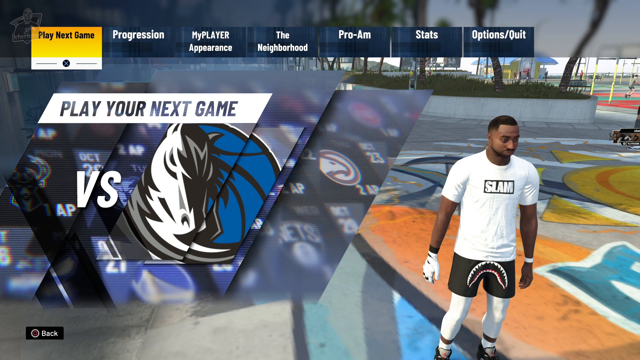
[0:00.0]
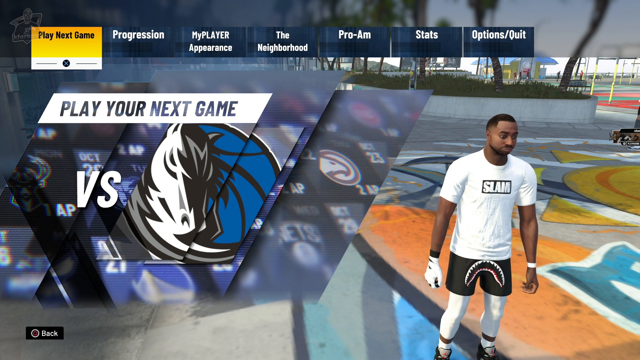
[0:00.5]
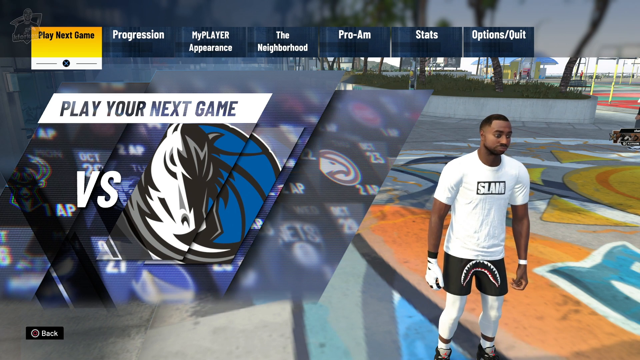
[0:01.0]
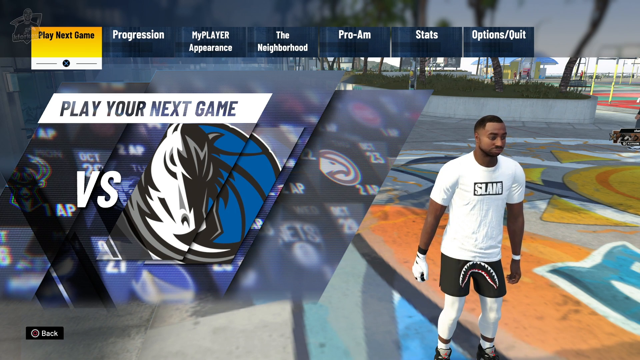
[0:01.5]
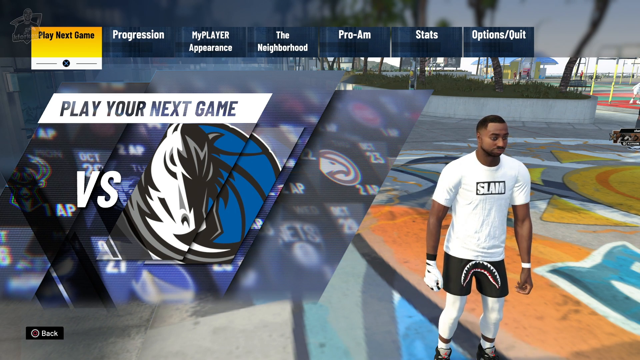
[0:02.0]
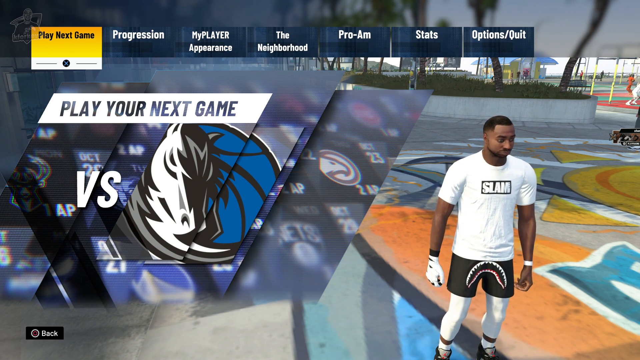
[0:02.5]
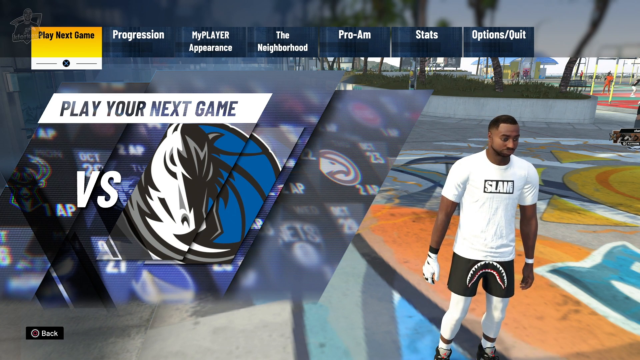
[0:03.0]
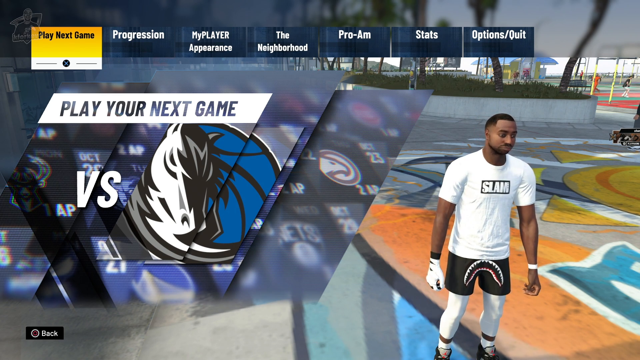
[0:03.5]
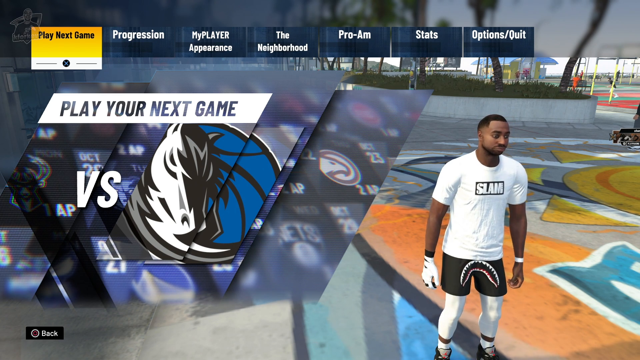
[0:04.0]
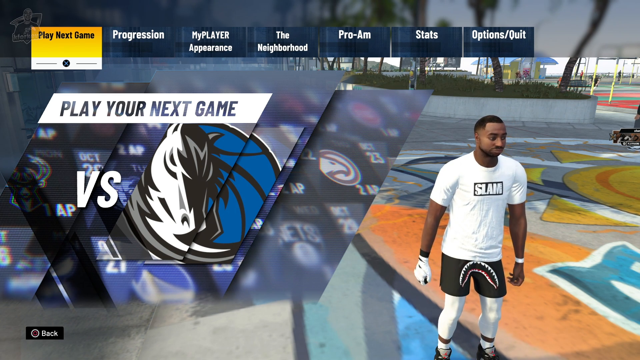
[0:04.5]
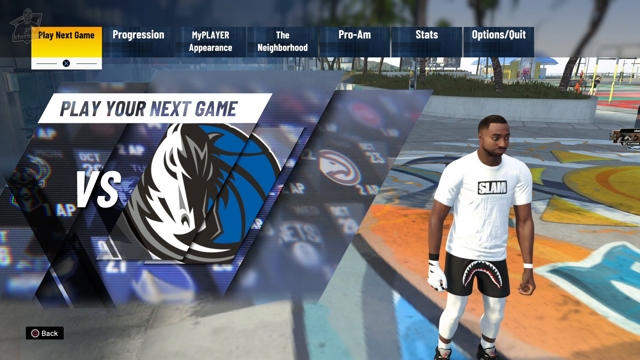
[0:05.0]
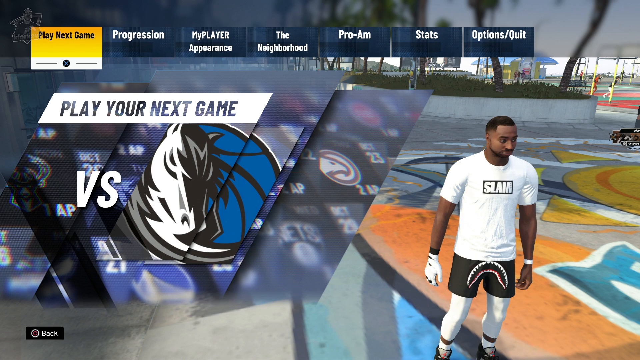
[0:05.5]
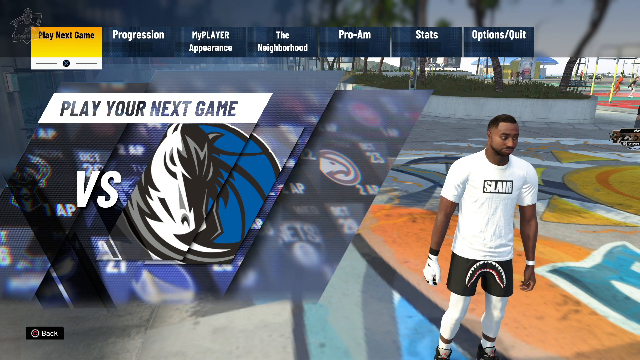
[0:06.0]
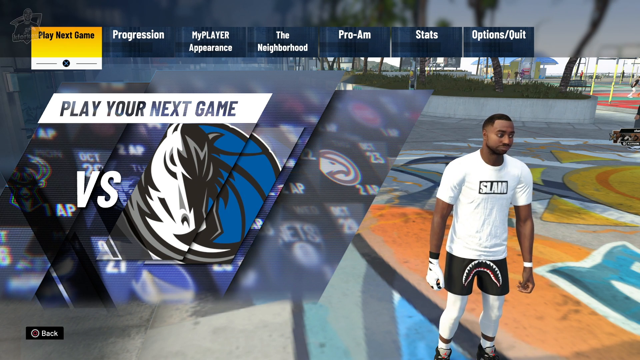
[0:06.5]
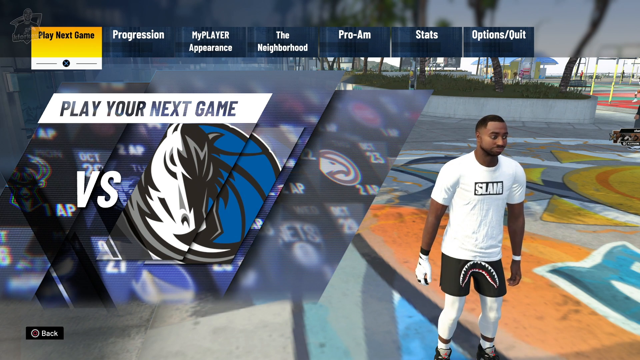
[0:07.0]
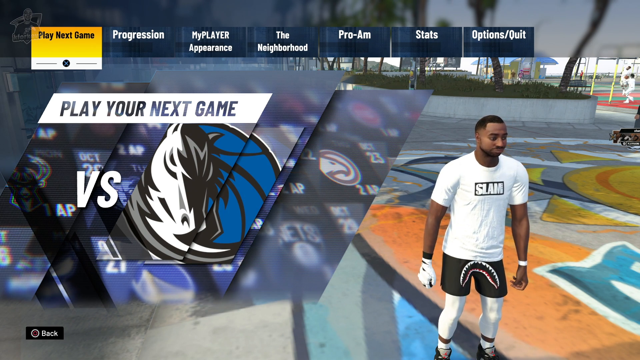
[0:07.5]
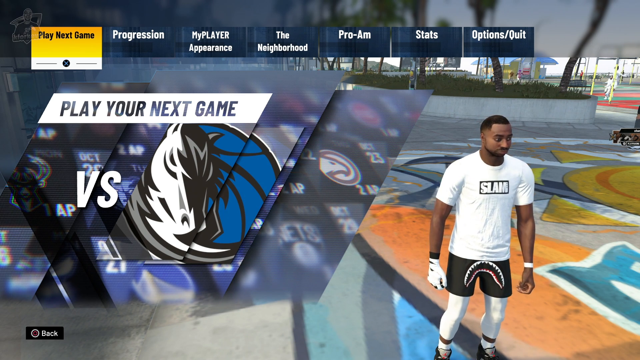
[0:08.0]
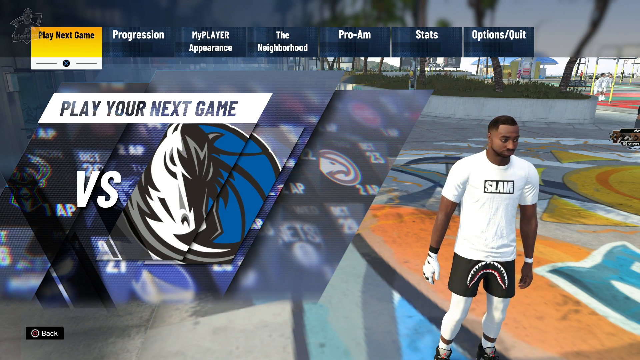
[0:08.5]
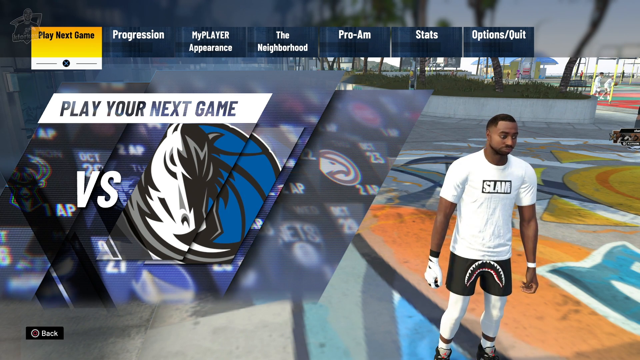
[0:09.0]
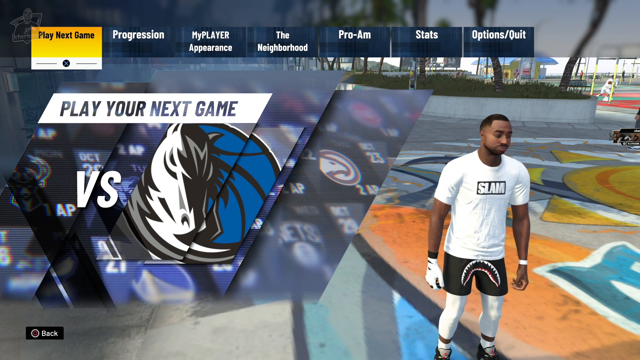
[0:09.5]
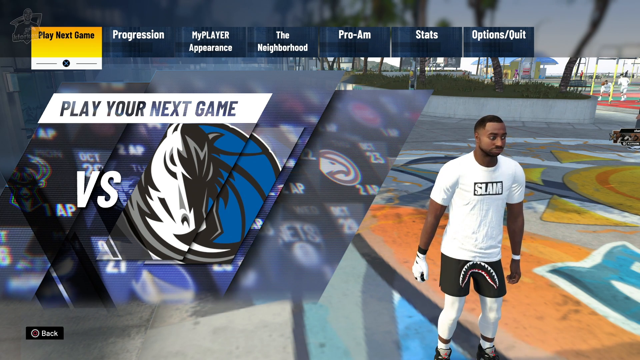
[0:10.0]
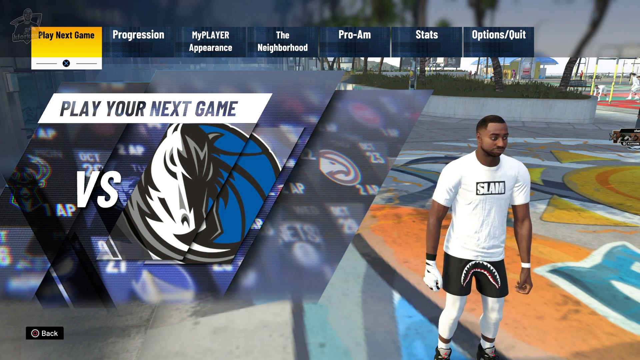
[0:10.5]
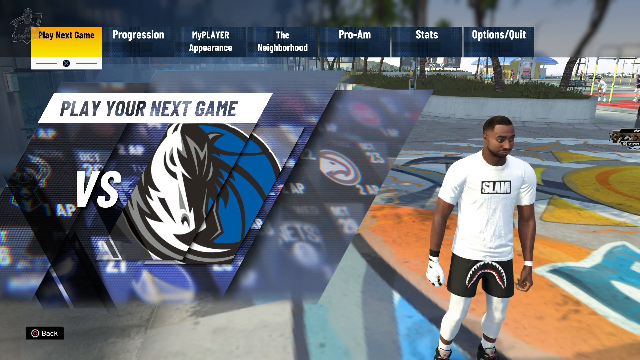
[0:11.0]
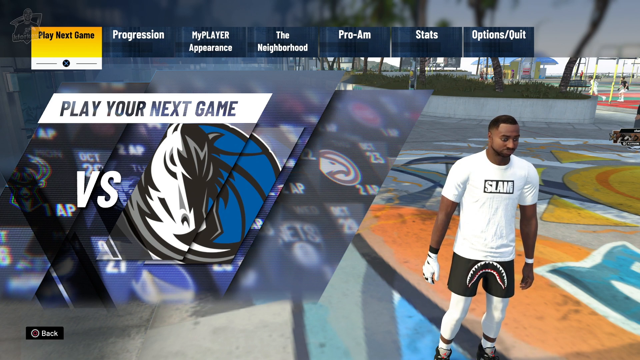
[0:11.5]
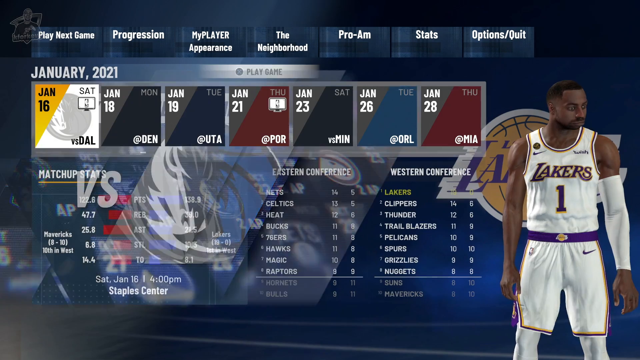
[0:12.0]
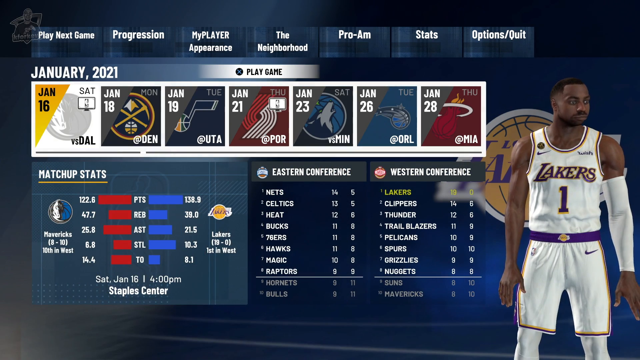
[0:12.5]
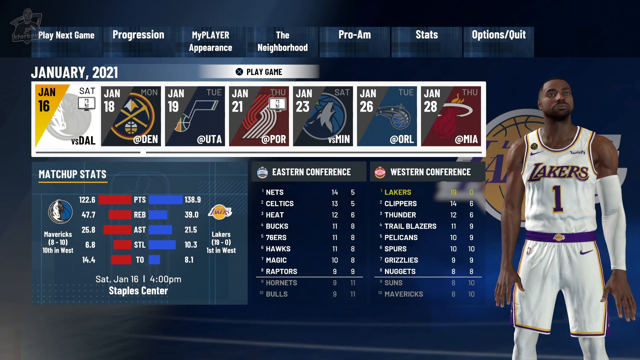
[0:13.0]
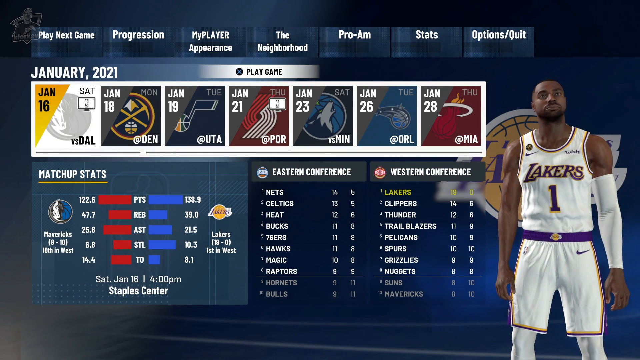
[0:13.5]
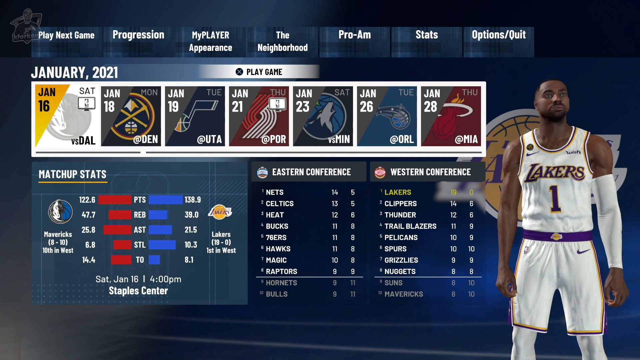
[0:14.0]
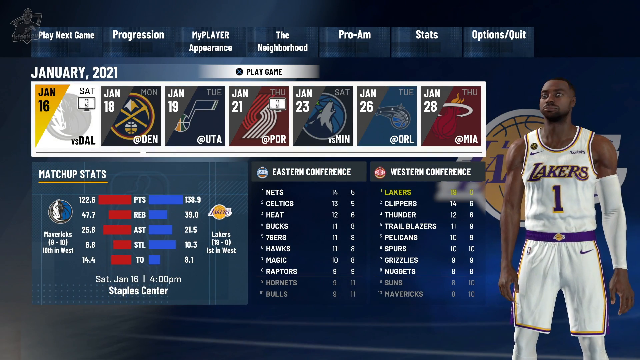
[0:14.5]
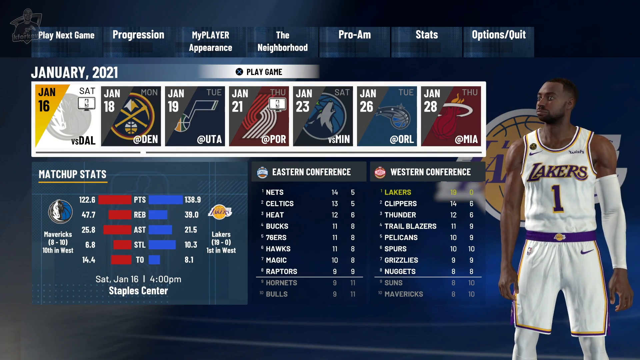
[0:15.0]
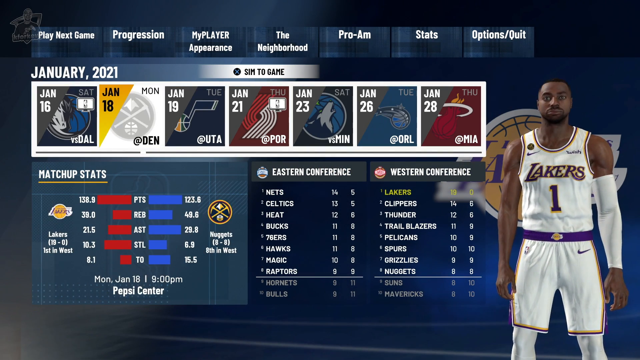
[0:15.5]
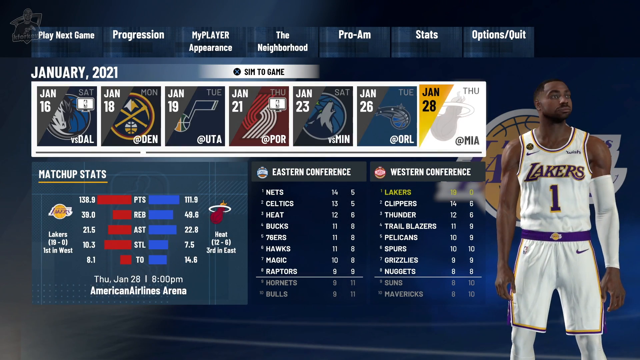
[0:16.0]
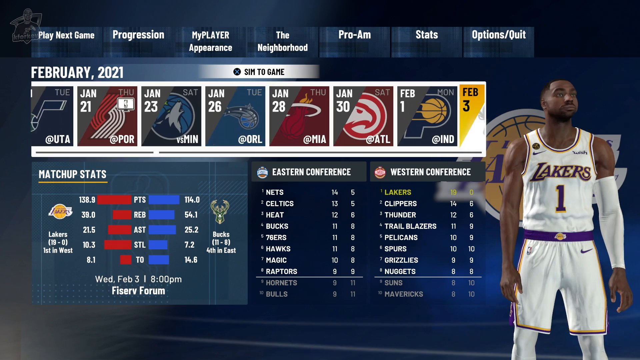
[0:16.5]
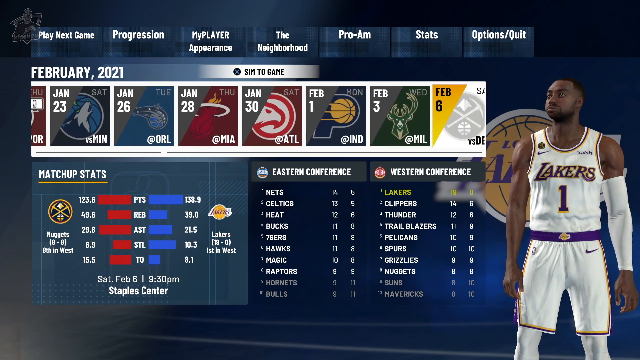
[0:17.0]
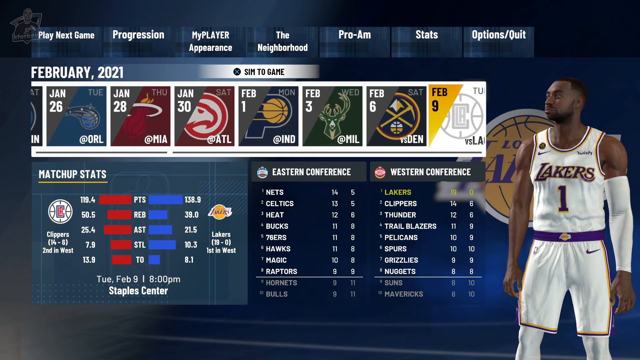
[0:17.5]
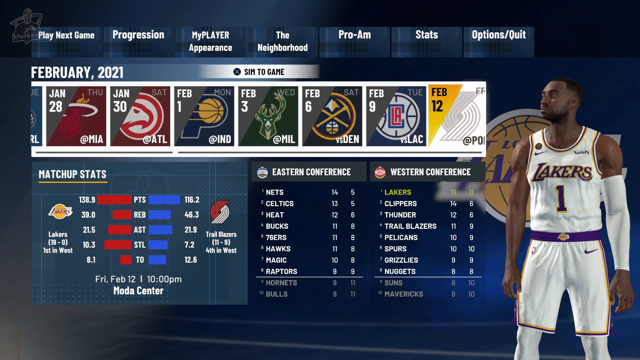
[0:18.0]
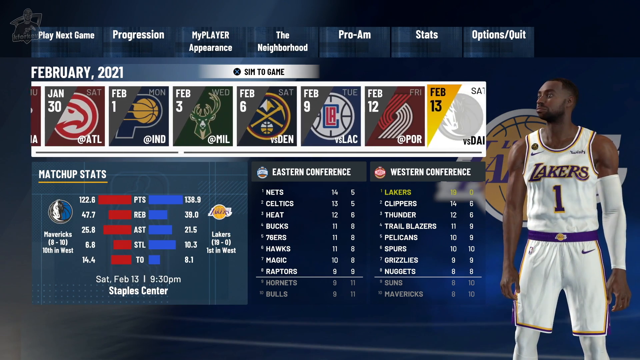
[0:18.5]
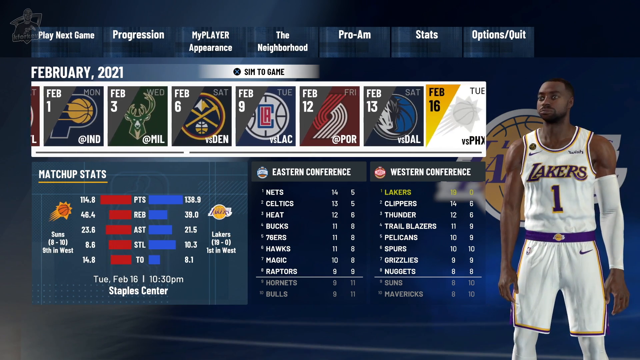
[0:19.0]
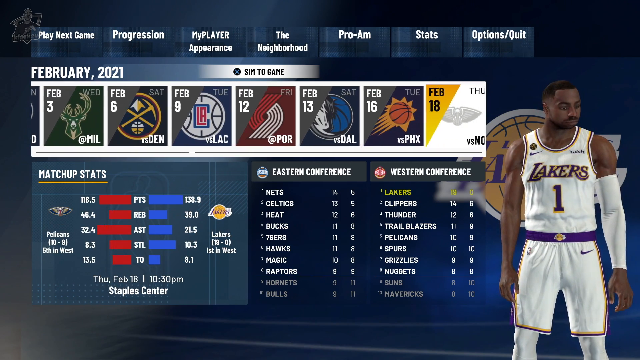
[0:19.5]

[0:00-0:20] The video shows what looks like a basketball or NBA game at its menu. Options run across the top: Play Next Game, Progression, My Player Appearance, The Neighborhood, Pro Am, Stats, and Options/Quit. Play Next Game is currently selected and highlighted in yellow. At the bottom left of the screen, text reads "play your next game" with a "vs" and an icon. At the bottom right is a picture of the player's avatar, apparently a black man wearing a white t-shirt with "slam" in the middle and black shorts with what looks like an upside-down mouth of short teeth; he is just standing with his hands behind his side. In the background, barely visible, is a basketball court in a park, where it looks like two people are laying up a basketball, passing it to each other and shooting. The menu suddenly changes, apparently because Play Next Game was clicked. "January 2021" appears at the top left in white text, and below it is a scrolling row of January 16, 18, 19, 21, 23, 26 and 28 in separate squares, each with a different team icon, apparently the teams to be played on those days. Many stats fill the bottom, and on the right side is a picture of the avatar in a Lakers uniform with the number one. The dates are then scrolled through to the right, revealing many other team icons and the later dates, up to February.